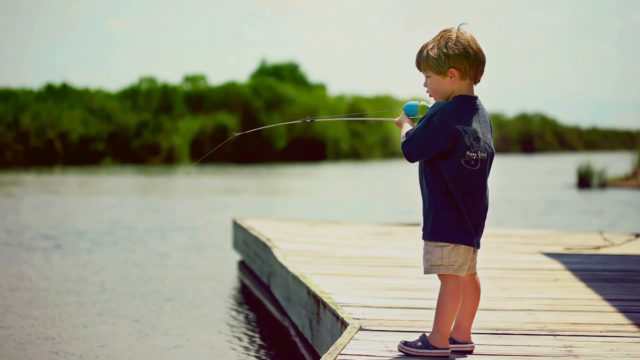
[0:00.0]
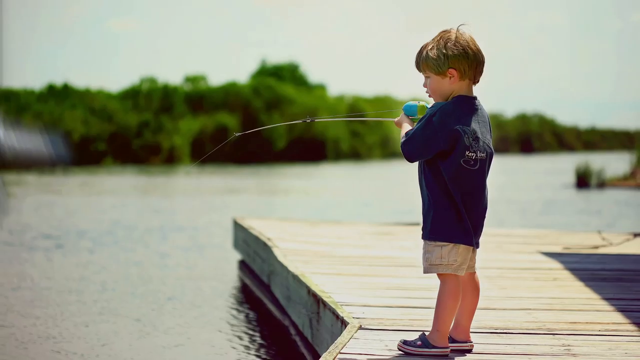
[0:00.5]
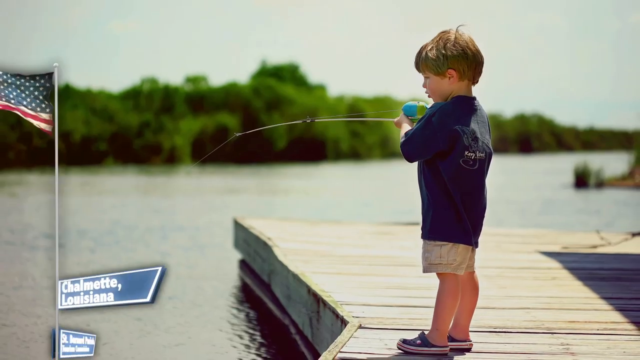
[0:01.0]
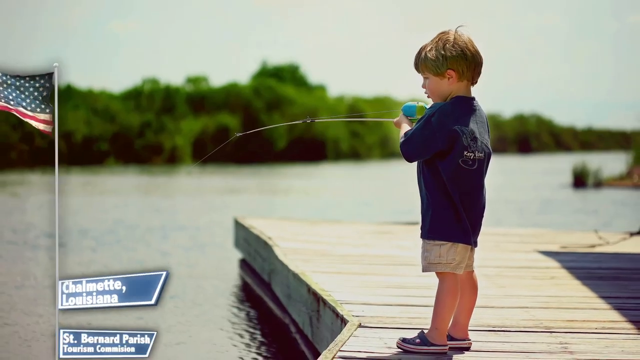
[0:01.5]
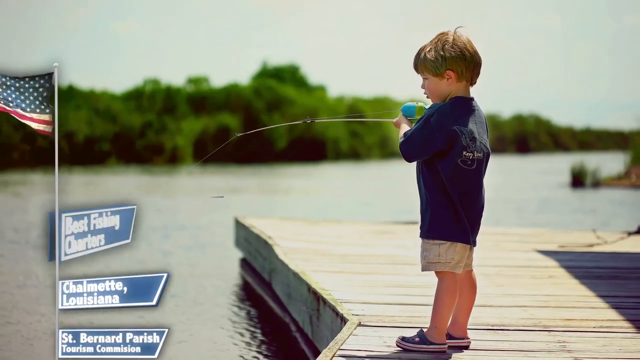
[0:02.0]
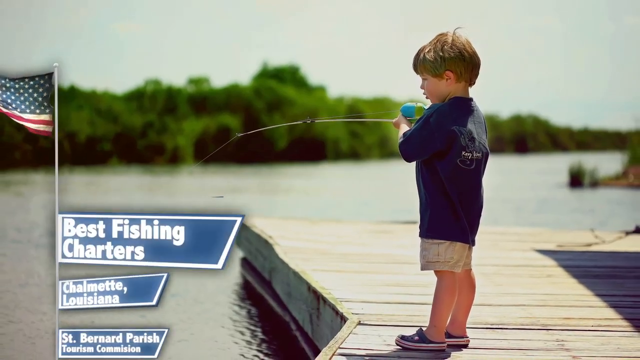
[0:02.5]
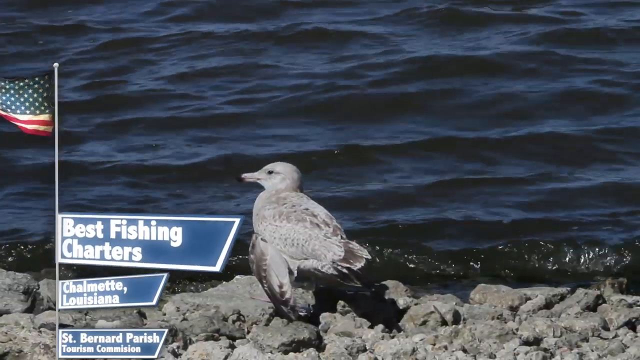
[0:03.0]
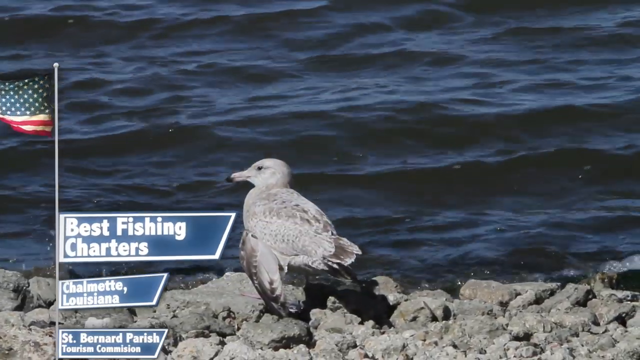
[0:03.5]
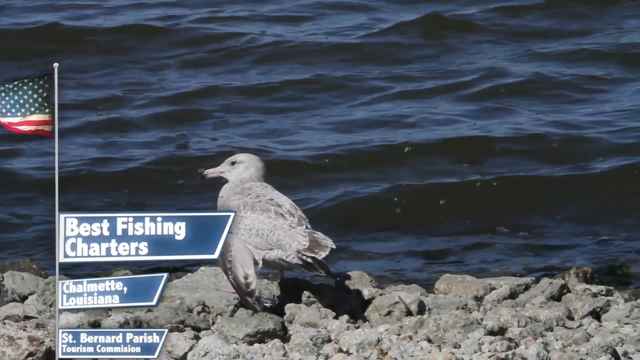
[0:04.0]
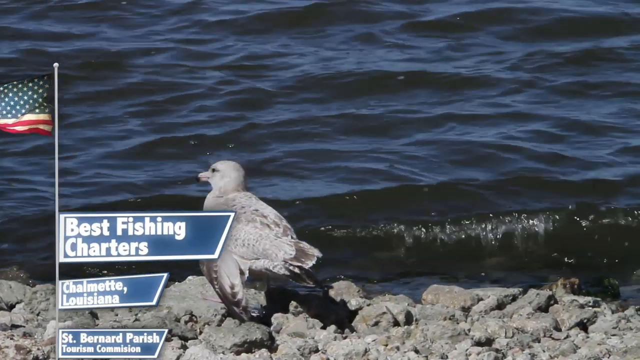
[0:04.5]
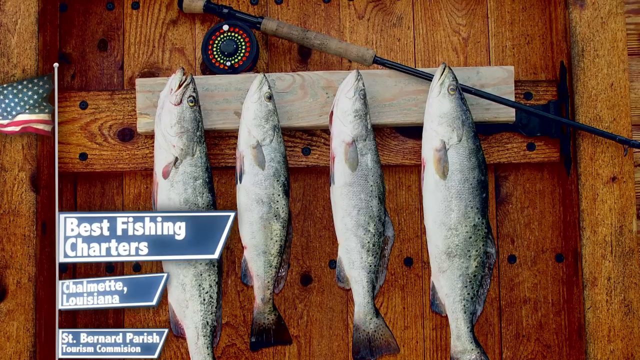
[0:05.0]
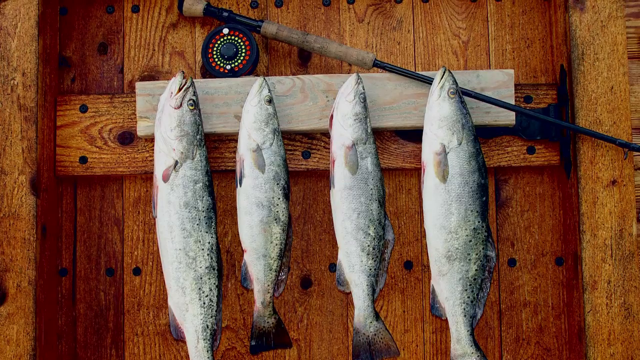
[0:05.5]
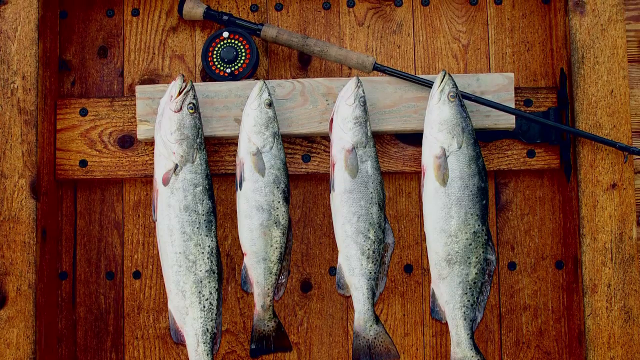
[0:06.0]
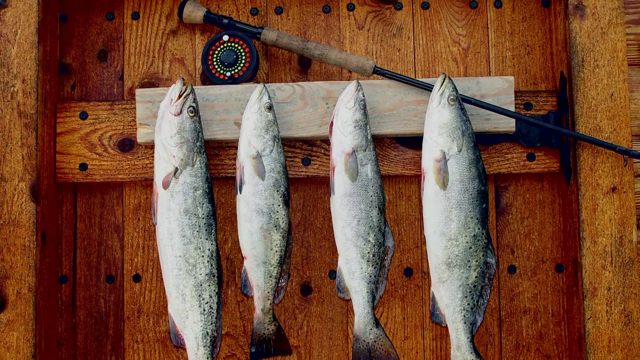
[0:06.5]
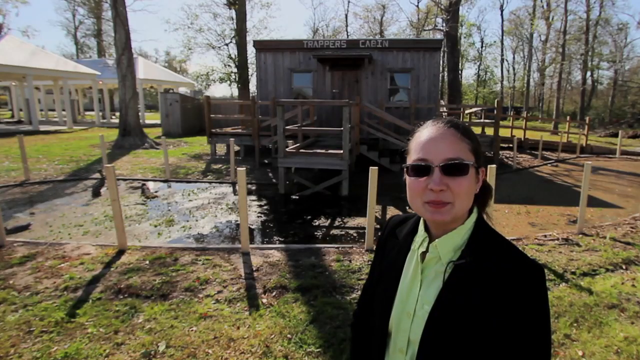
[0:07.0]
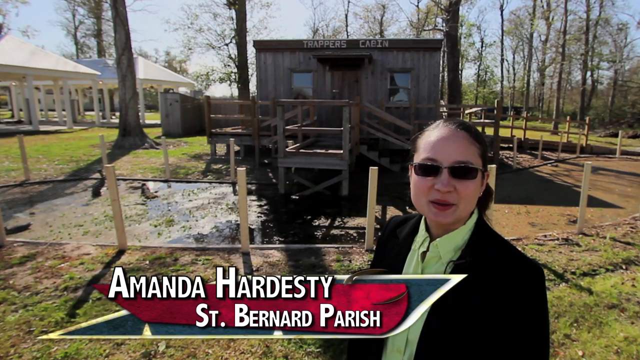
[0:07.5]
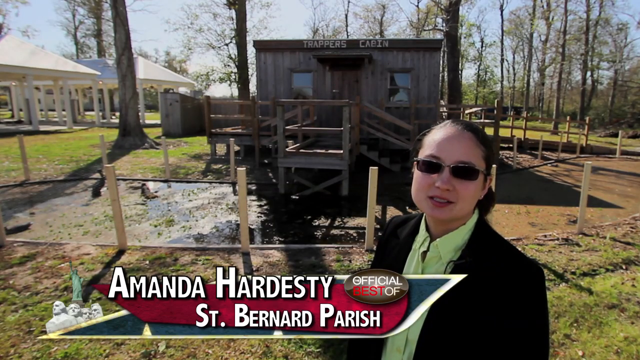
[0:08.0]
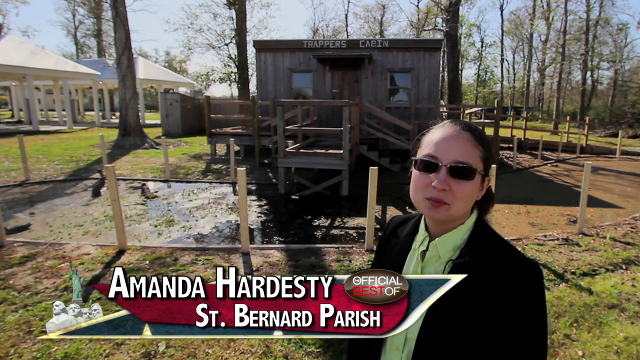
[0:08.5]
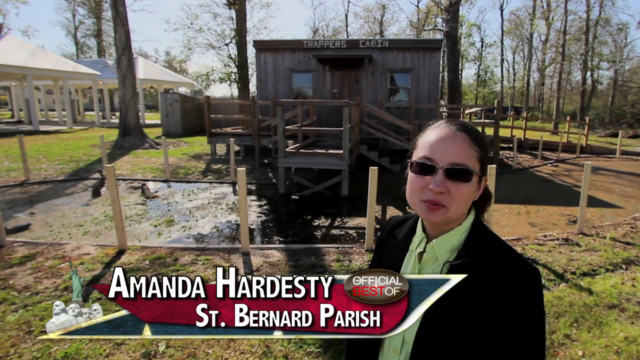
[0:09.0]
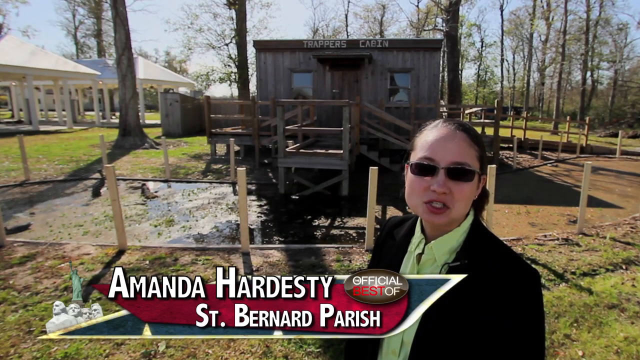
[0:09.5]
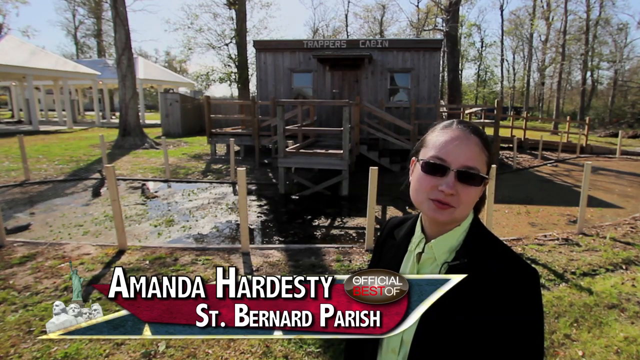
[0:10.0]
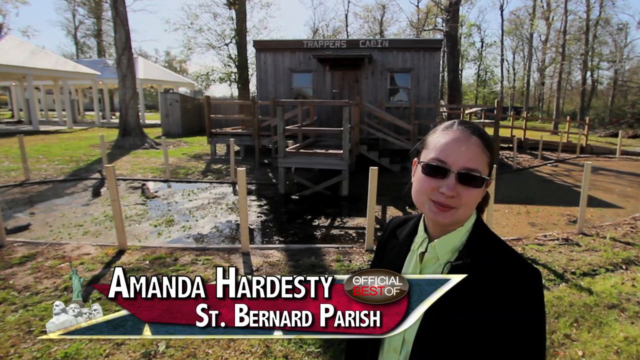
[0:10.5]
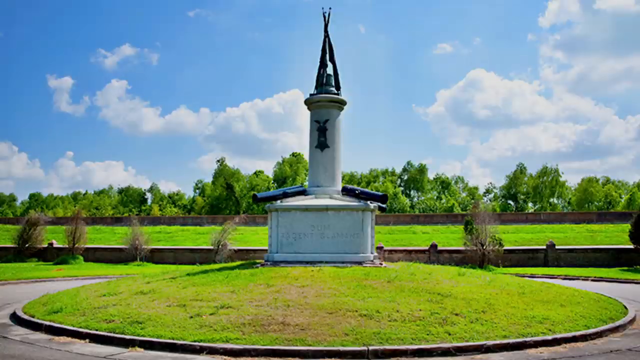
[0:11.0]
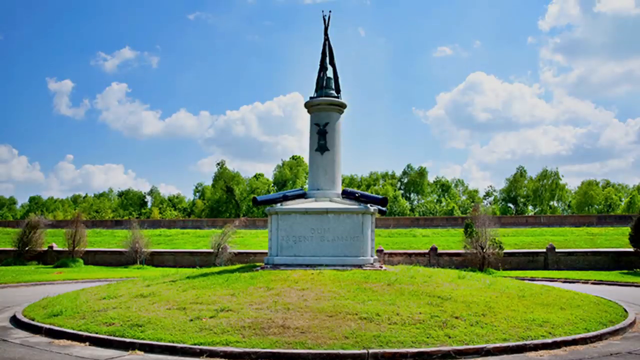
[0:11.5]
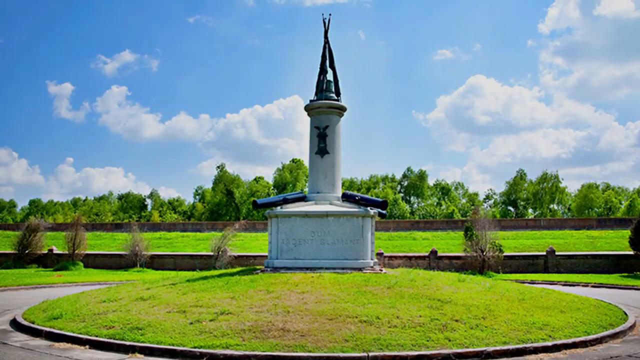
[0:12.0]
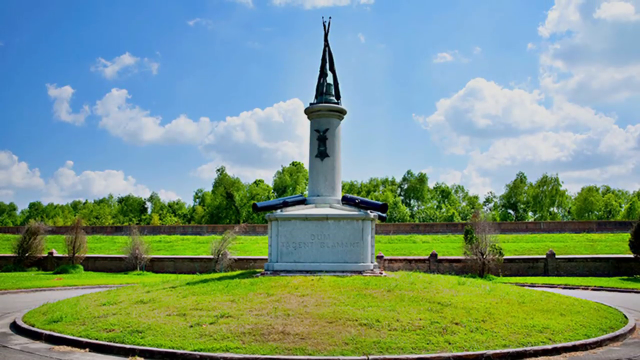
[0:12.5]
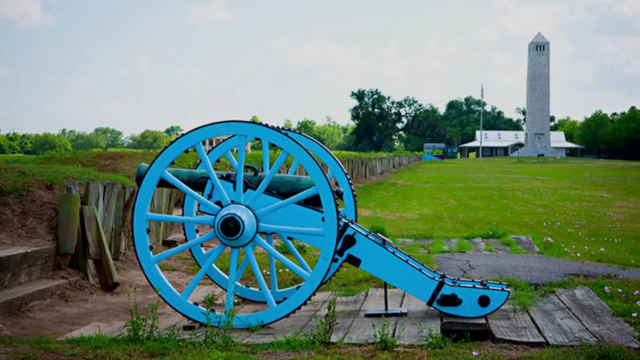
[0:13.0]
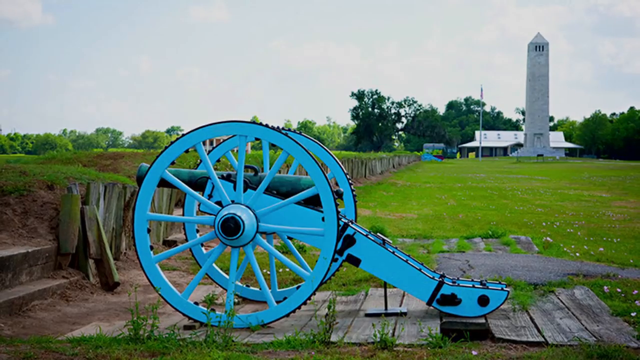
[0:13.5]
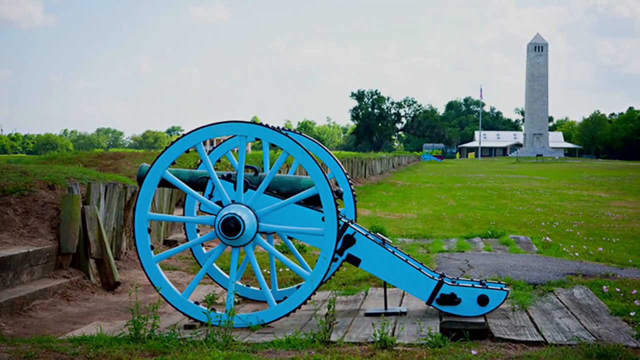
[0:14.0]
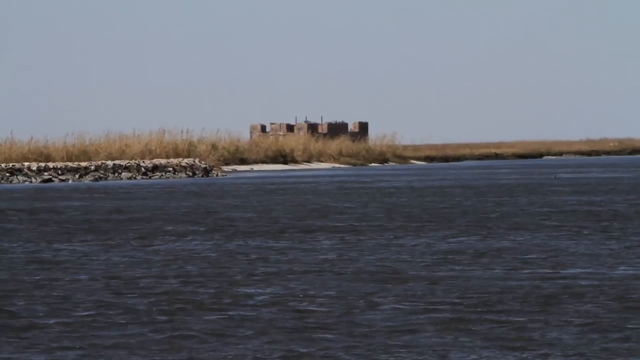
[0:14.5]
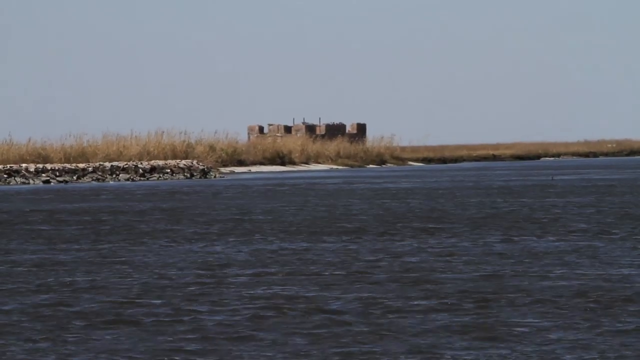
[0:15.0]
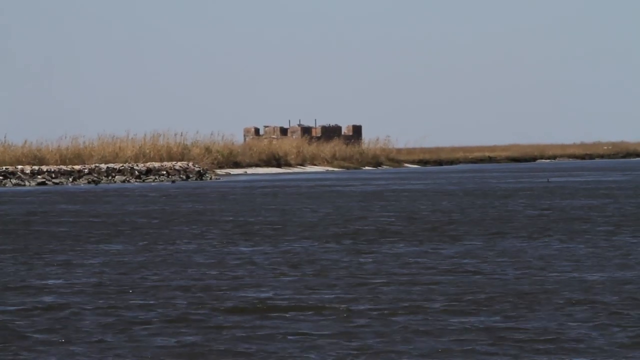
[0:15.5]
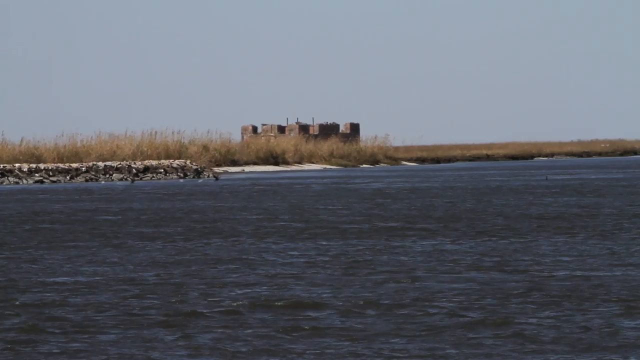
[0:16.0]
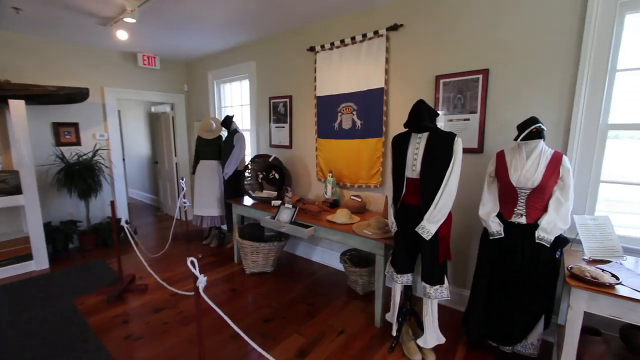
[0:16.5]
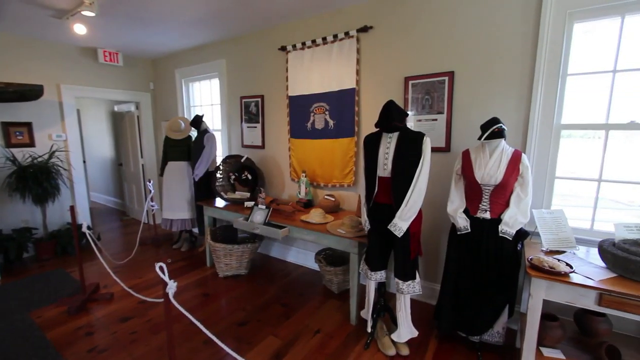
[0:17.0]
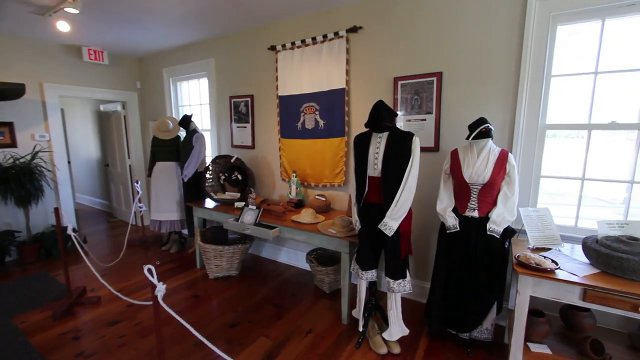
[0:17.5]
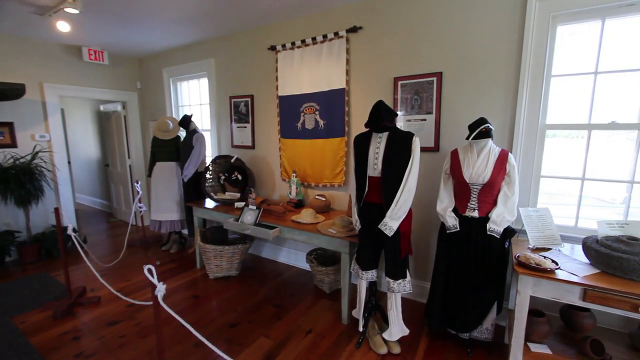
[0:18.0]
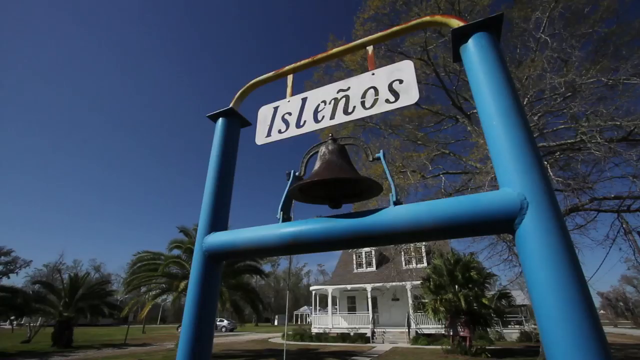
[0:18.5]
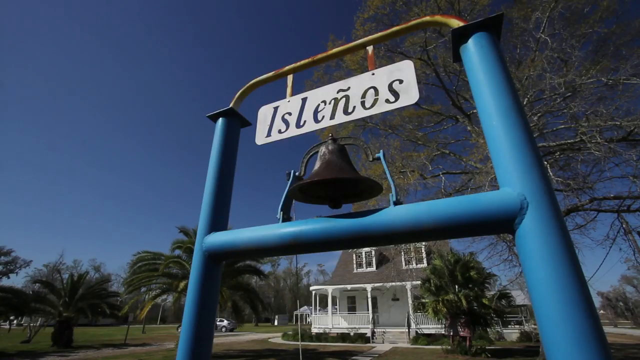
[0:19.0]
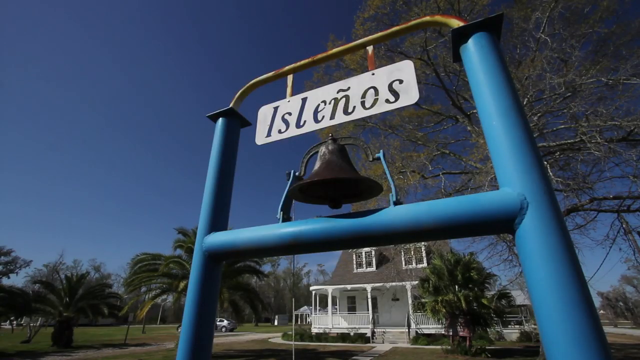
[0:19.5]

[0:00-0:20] A little boy, seen from sort of a side view, is fishing on a dock with his fishing pole; he looks maybe about five or six years old. A graphic comes in at the bottom left with an American flagpole, along with a blue sign that looks kind of like a street sign; it says "Best Fishing Charters" and names a place in Louisiana. A picture of a bird appears, followed by a picture of several fish. A woman named Amanda Hardesty, apparently at St. Bernard Parish, appears wearing sunglasses, a black vest and a light green undershirt. Static images of various environments follow, such as a light blue wheelbarrow, along with video of speed jet skis going across the water and historical buildings.